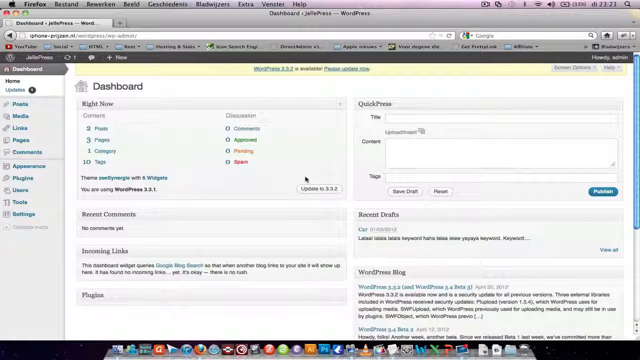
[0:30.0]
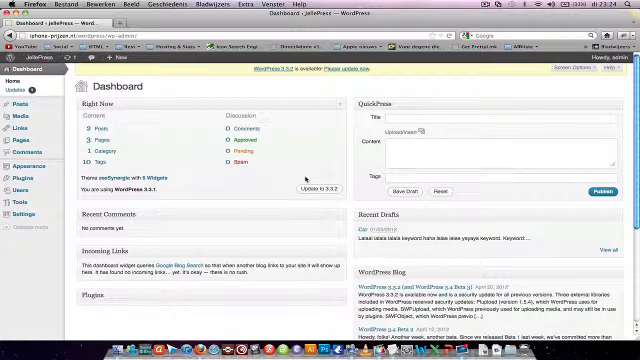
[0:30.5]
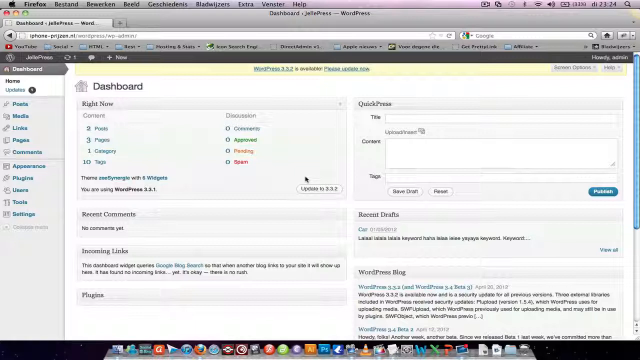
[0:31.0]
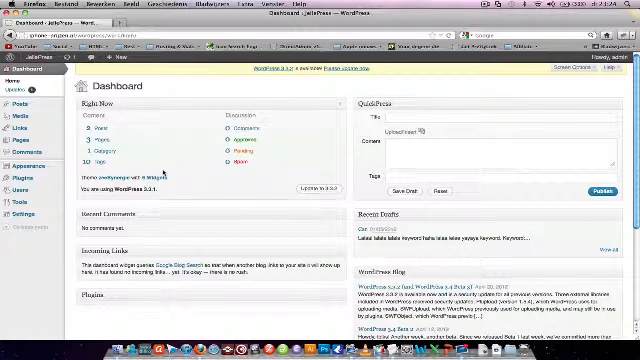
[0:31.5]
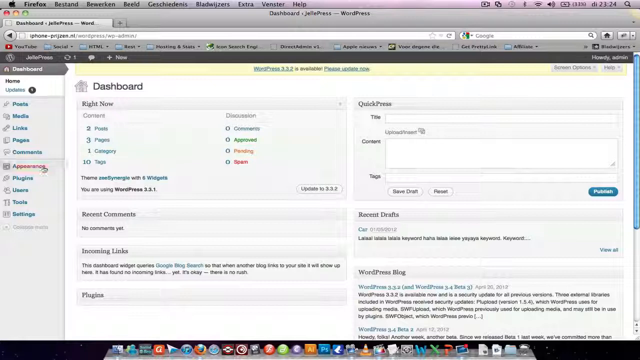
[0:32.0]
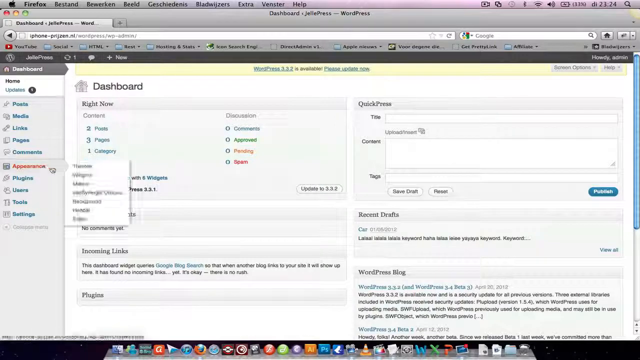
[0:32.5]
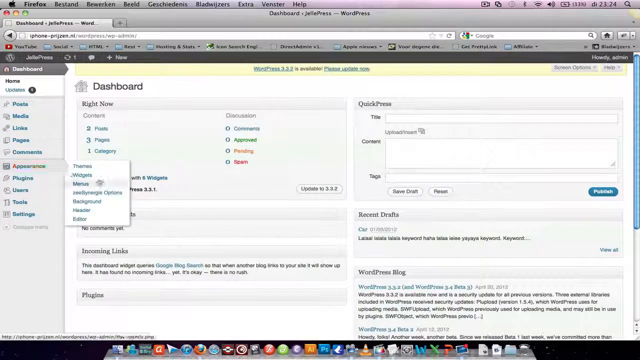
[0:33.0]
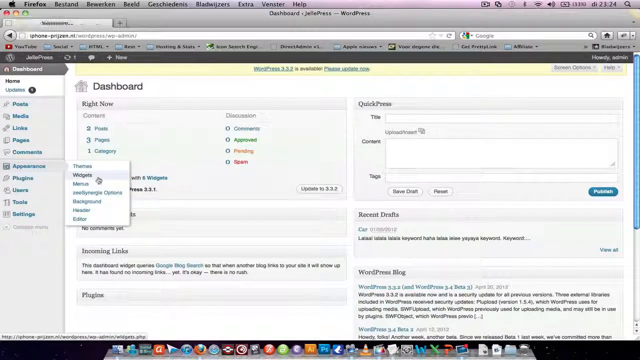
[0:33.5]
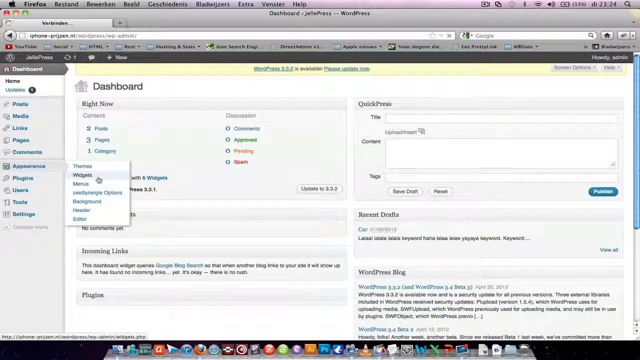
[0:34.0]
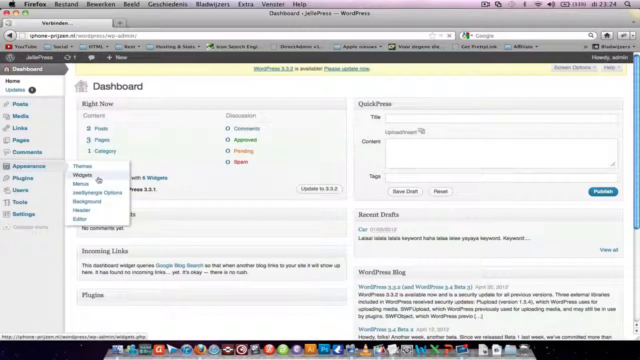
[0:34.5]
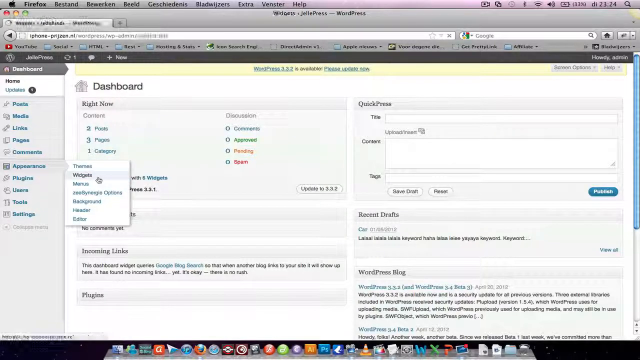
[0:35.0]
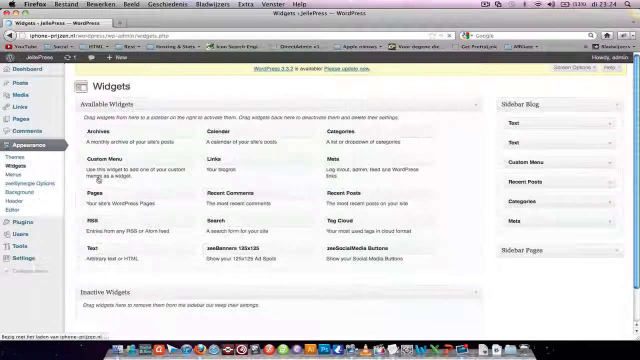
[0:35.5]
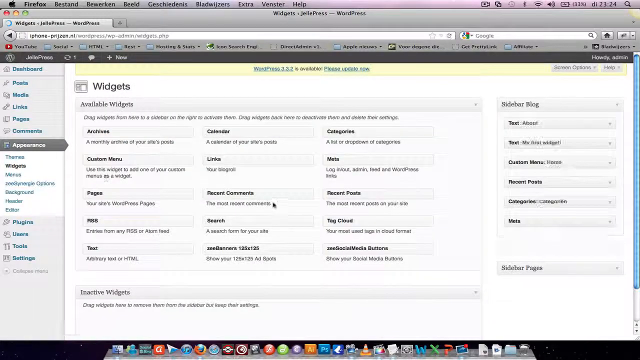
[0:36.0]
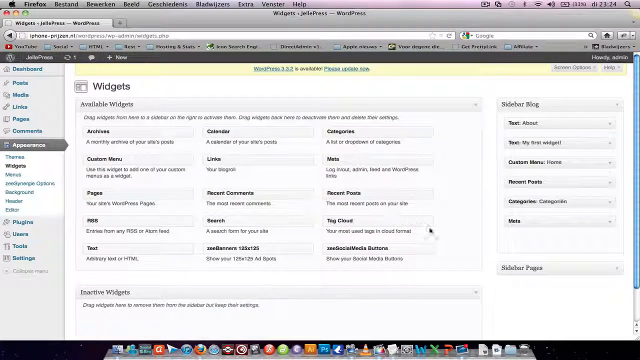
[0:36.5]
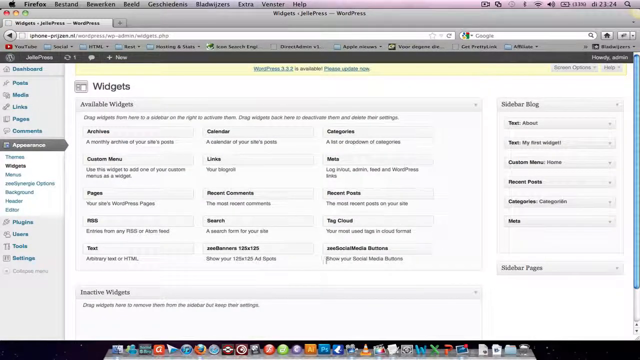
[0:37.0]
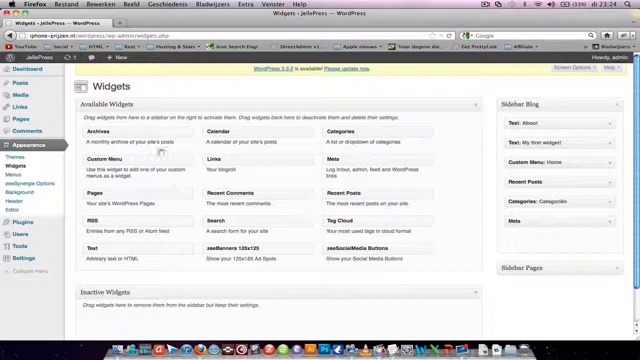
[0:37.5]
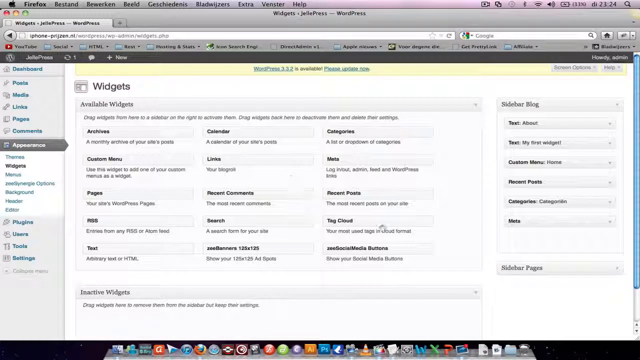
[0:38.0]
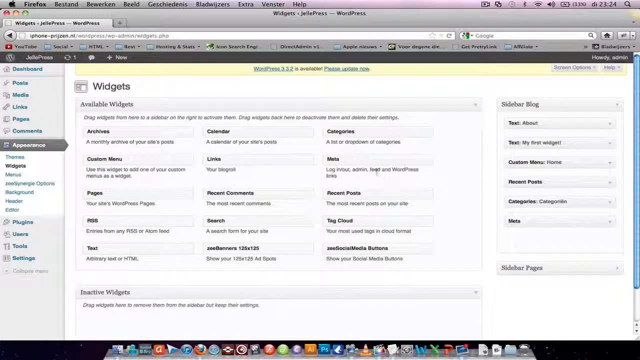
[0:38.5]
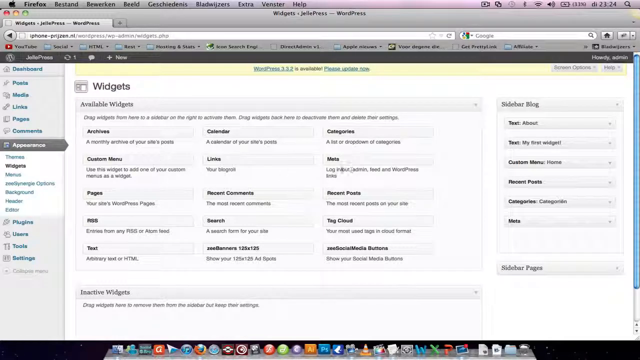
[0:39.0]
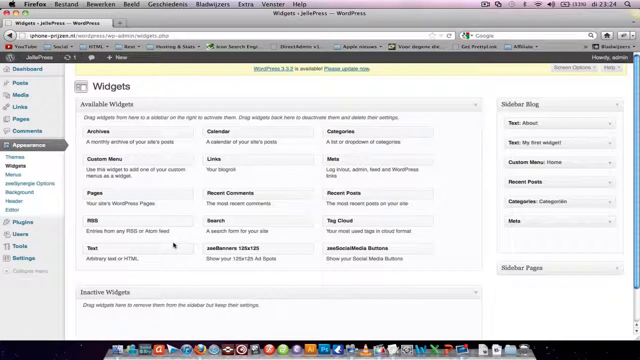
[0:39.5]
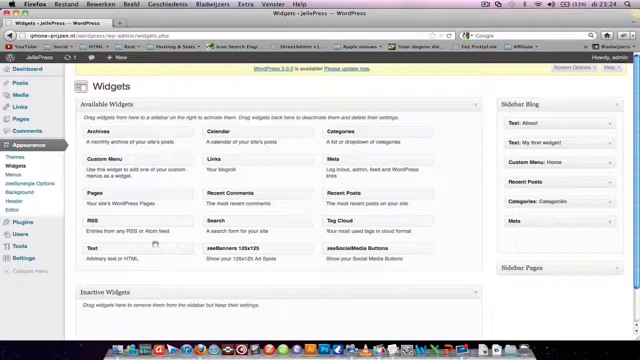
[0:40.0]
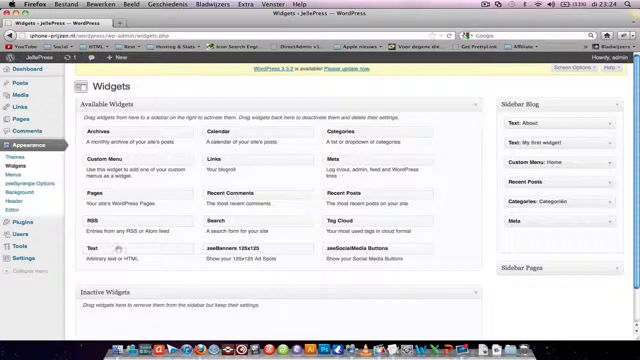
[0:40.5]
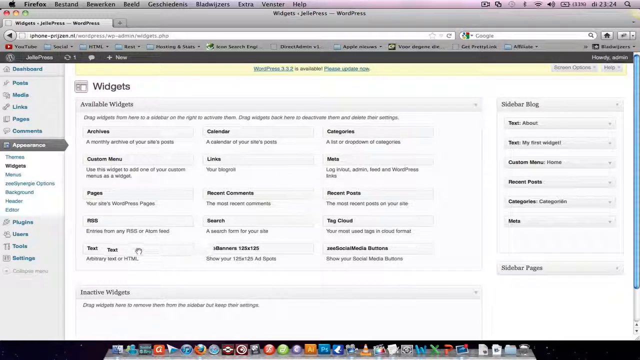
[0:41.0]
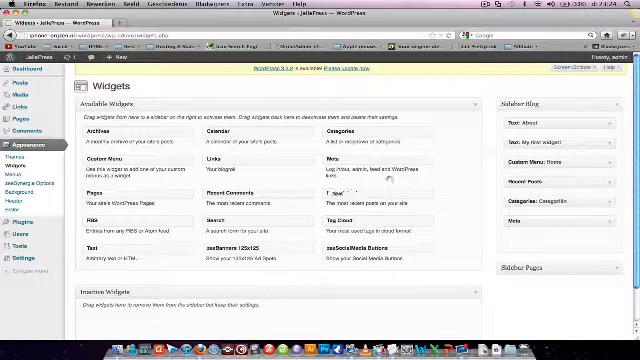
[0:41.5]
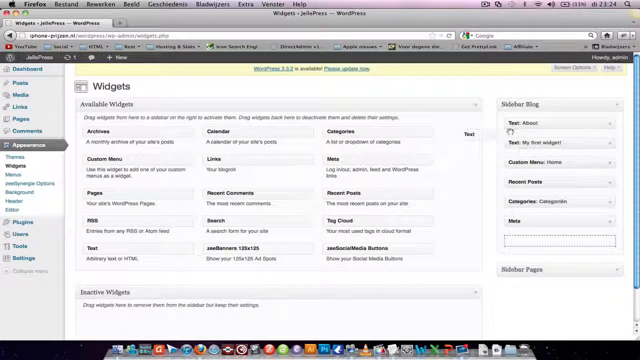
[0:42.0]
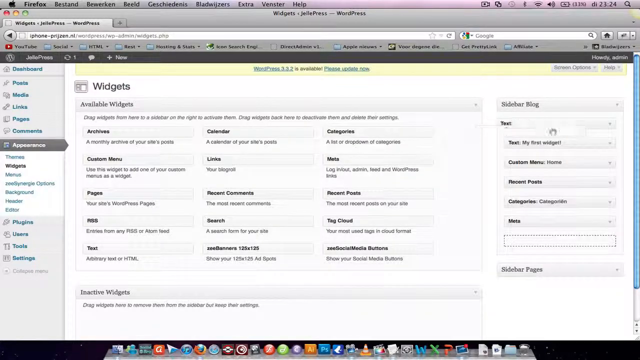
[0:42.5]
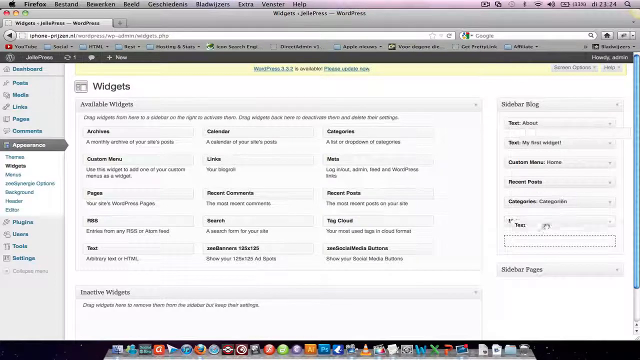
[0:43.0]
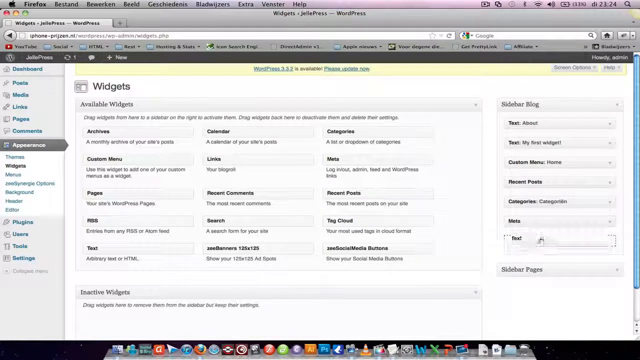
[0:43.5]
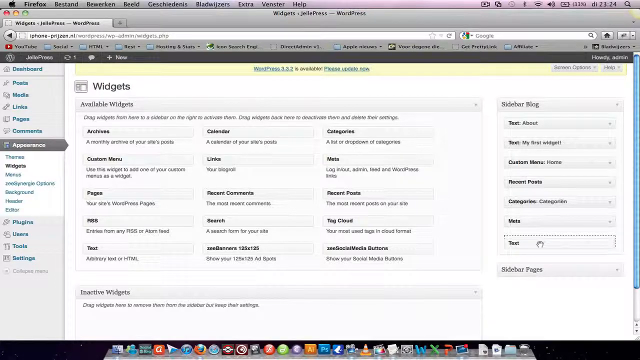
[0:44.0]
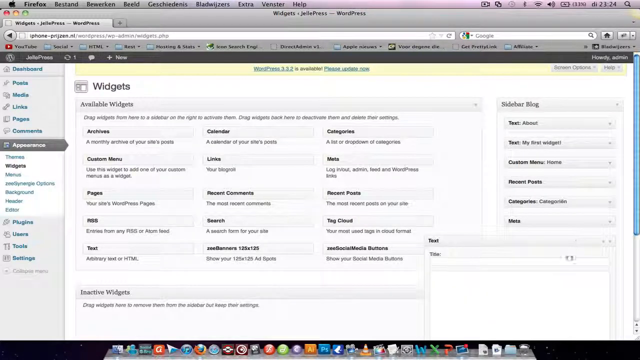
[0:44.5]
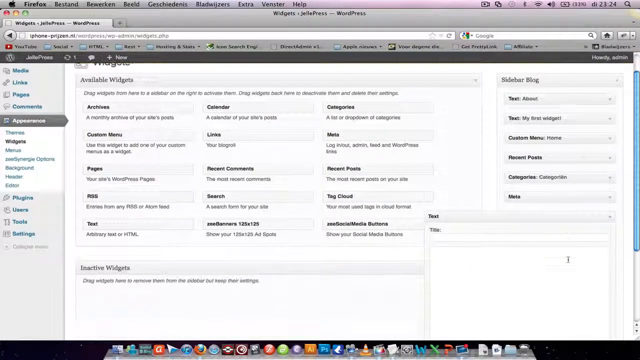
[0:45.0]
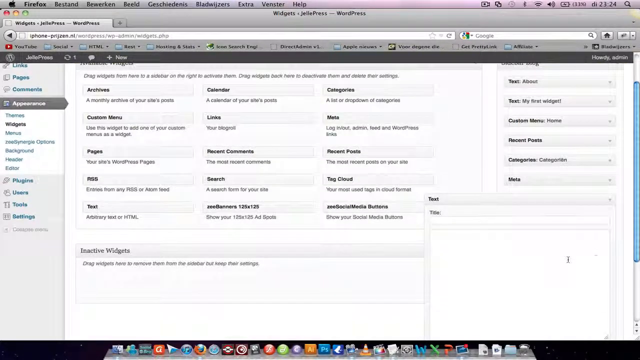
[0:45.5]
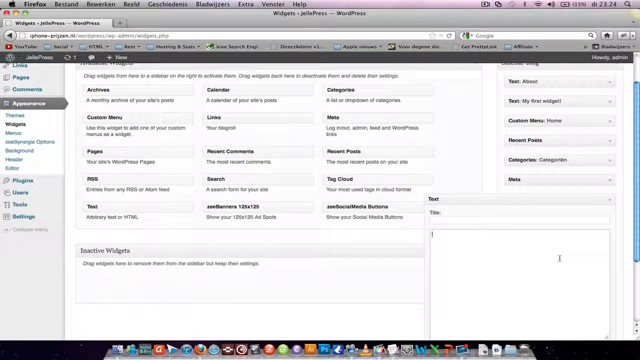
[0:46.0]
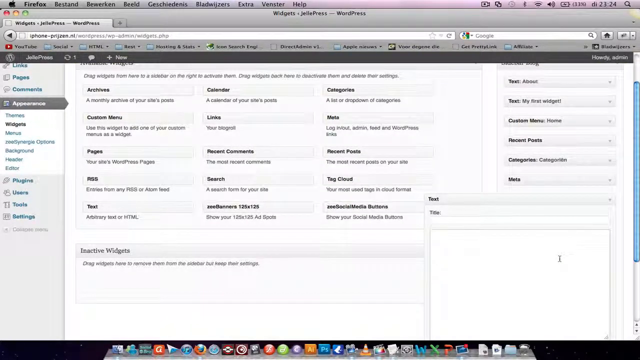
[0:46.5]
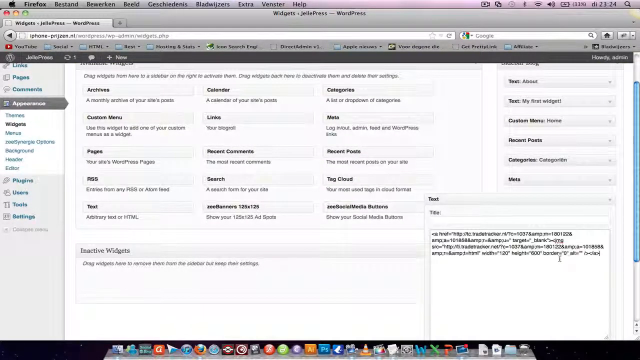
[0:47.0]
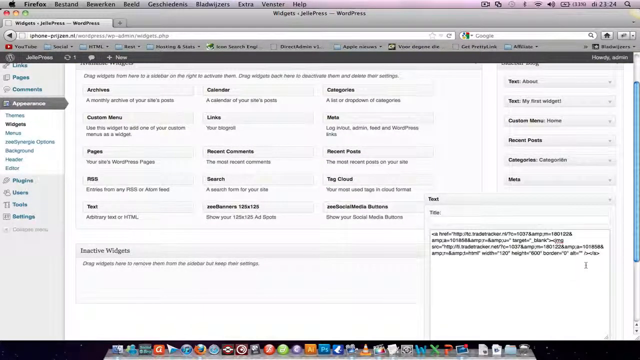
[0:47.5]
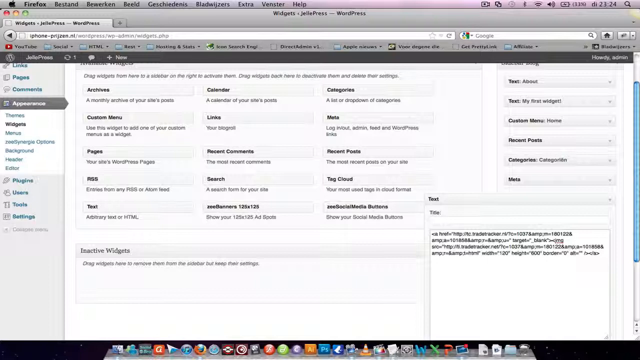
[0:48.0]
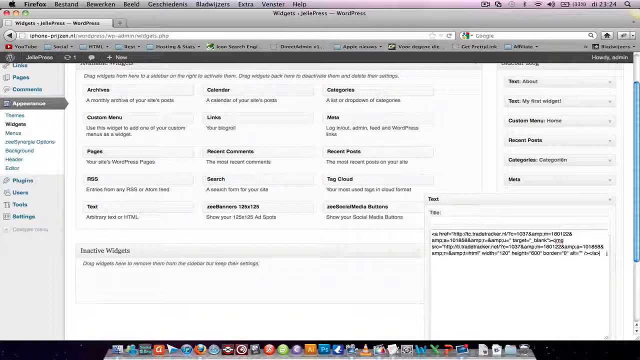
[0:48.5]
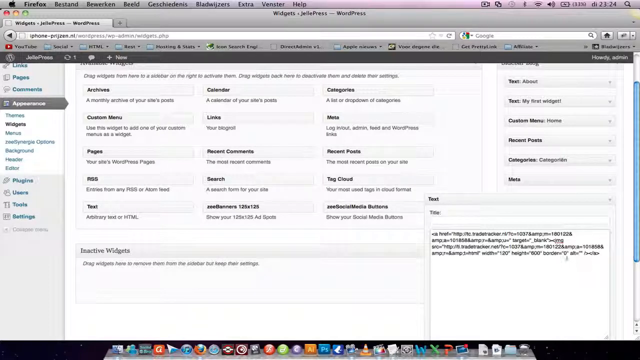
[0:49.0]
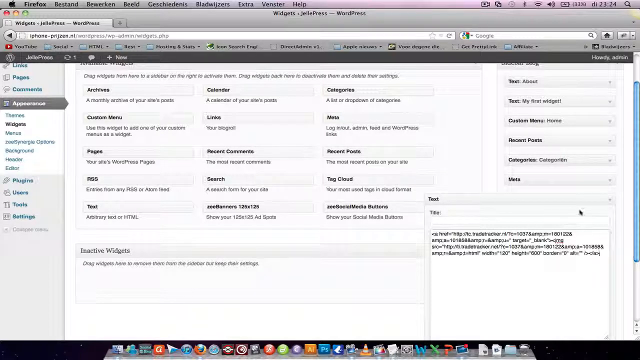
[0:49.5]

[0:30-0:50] The cursor goes to the left side of the dashboard, then down to a vertical tab labeled "Appearance". As it moves down, each tab lights up with a gray, arrow-like ribbon. On Appearance, a side window shows a column of words: "Themes", "Widgets", "Menus", "zeeSynergie", "Options", "Background", "Header" and "Editor". The cursor becomes a glove and chooses Widgets. Appearance now has the gray arrow, and the Widgets page appears, with "Available Widgets" in a square. The cursor moves under the various widgets, which are little squares with editors. The arrow grabs just the text widget and puts it on the side labeled "Sidebar Blog", at the bottom below the various rectangles with text on them. It then clicks on it, and it opens into what looks like a page.